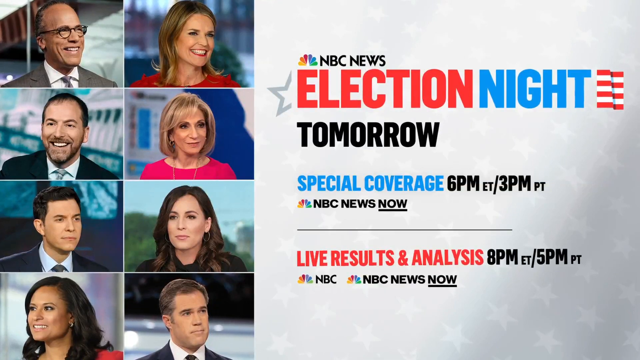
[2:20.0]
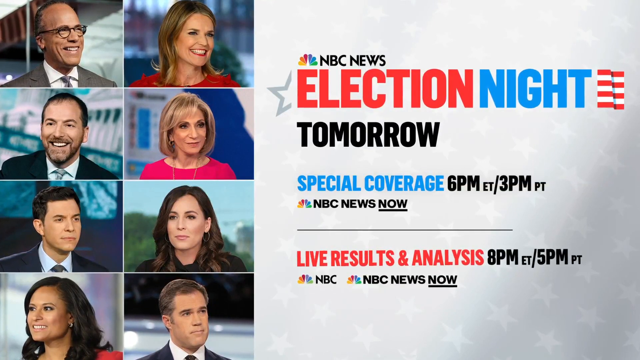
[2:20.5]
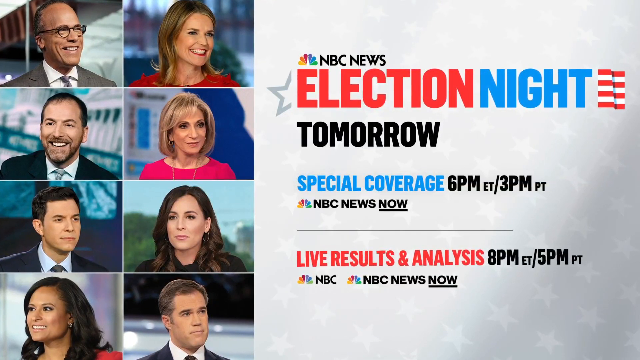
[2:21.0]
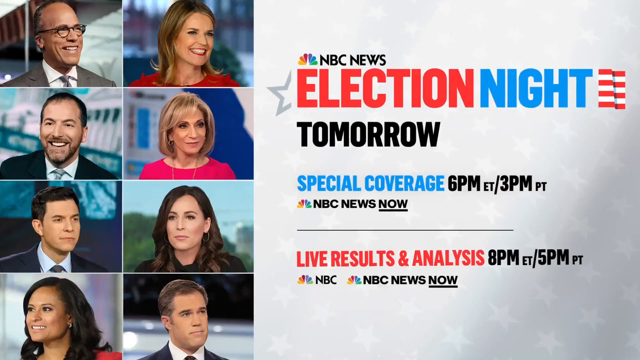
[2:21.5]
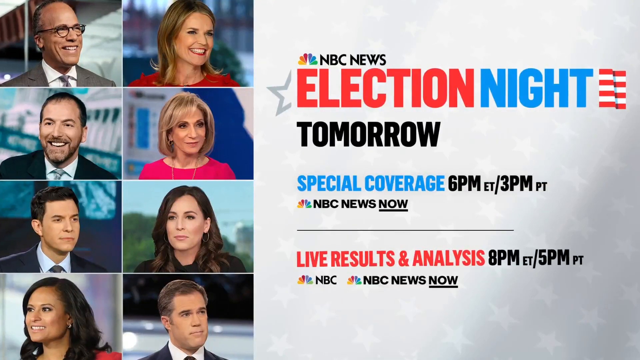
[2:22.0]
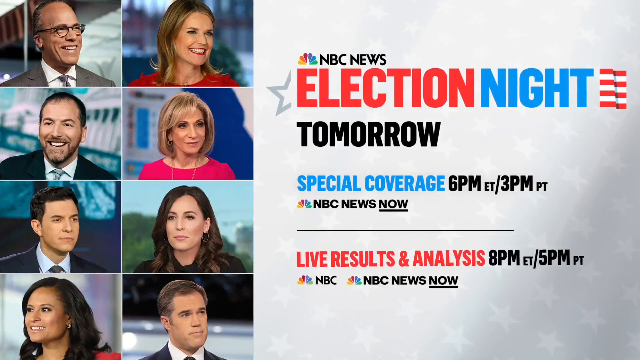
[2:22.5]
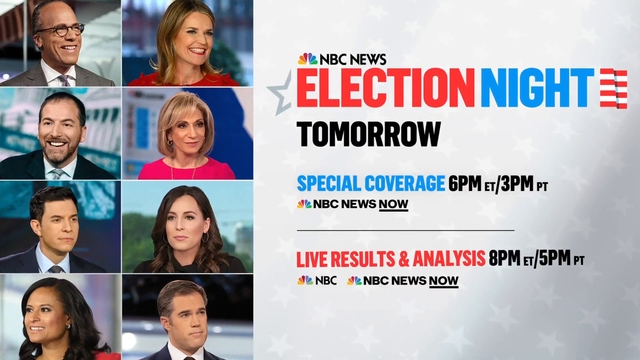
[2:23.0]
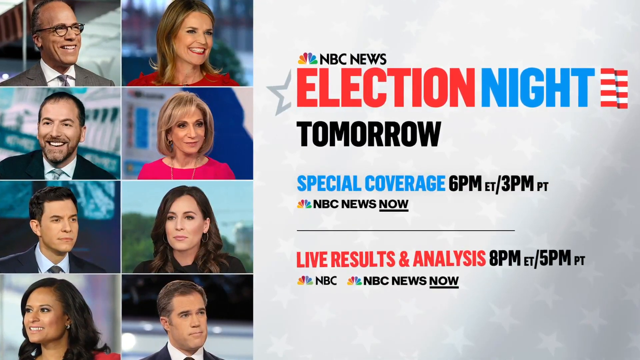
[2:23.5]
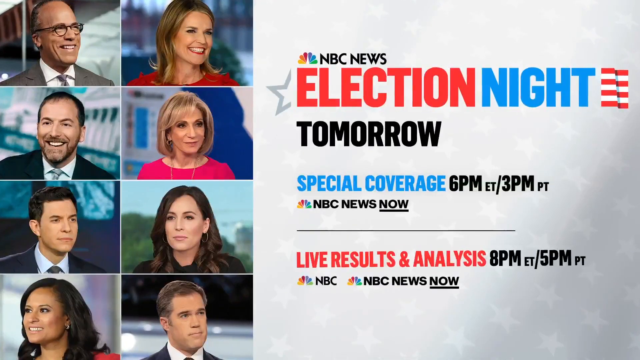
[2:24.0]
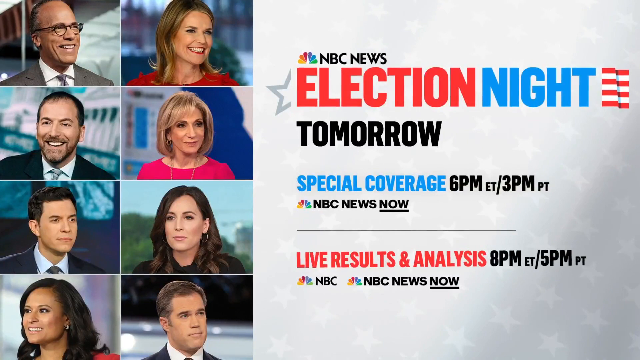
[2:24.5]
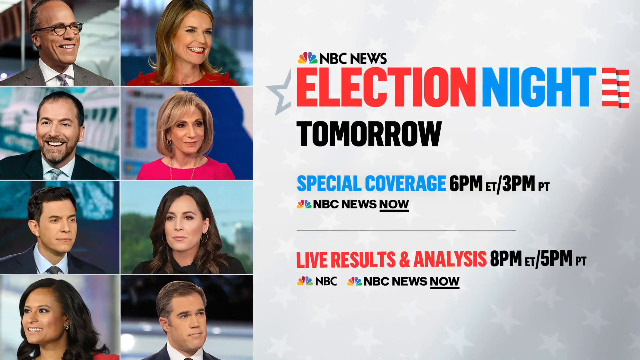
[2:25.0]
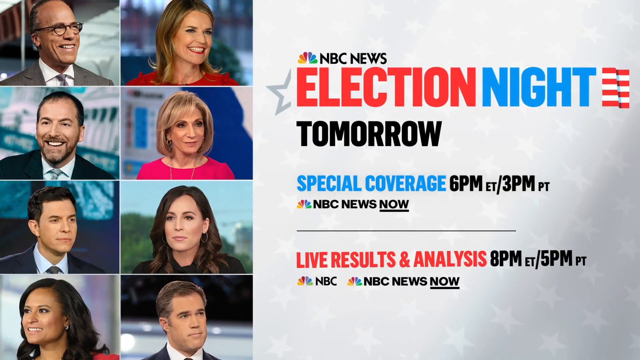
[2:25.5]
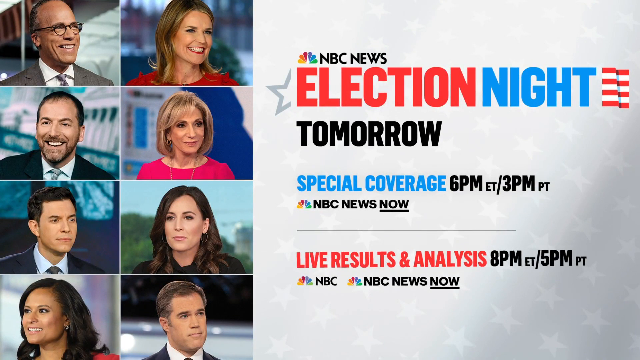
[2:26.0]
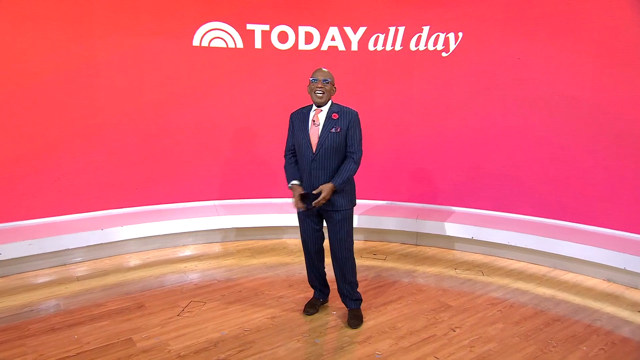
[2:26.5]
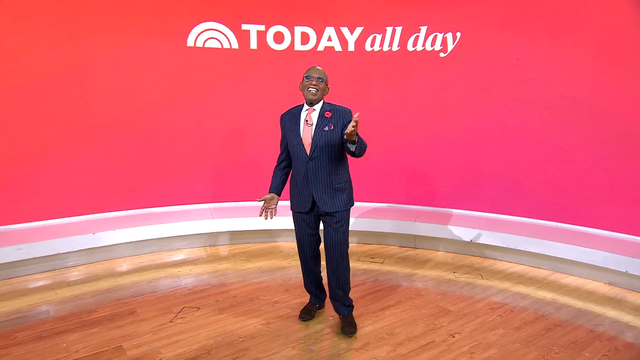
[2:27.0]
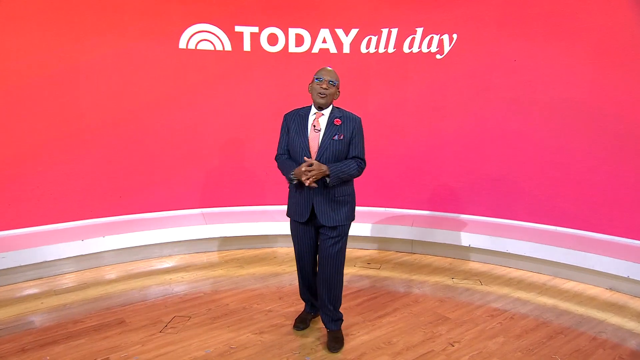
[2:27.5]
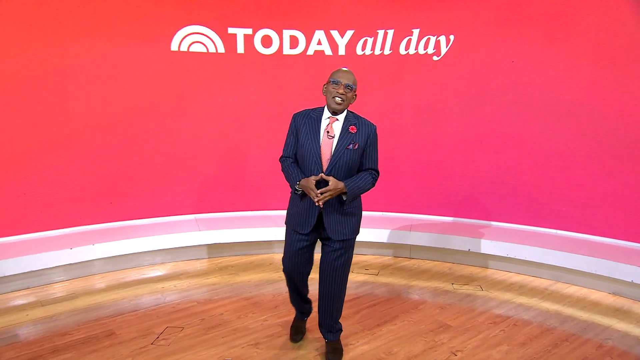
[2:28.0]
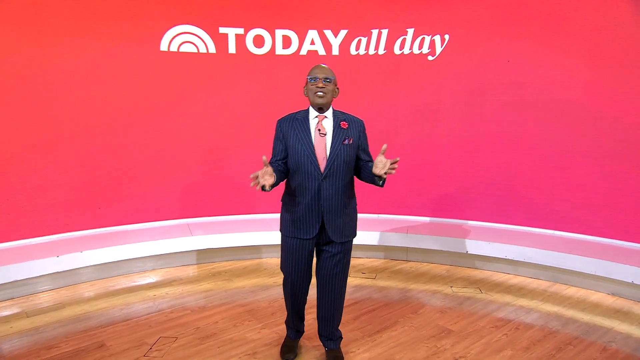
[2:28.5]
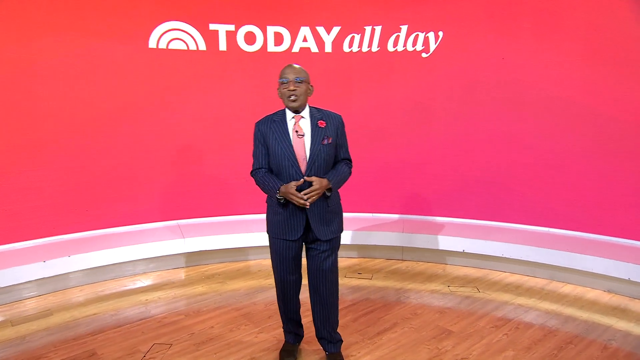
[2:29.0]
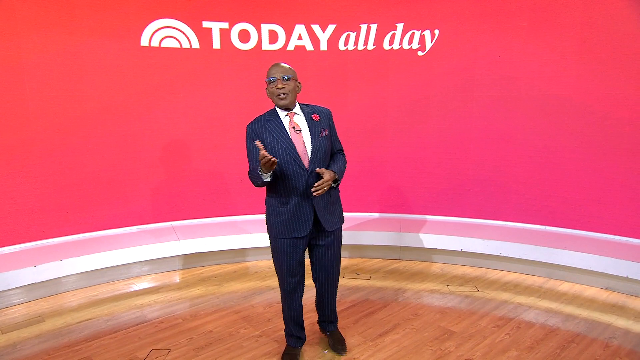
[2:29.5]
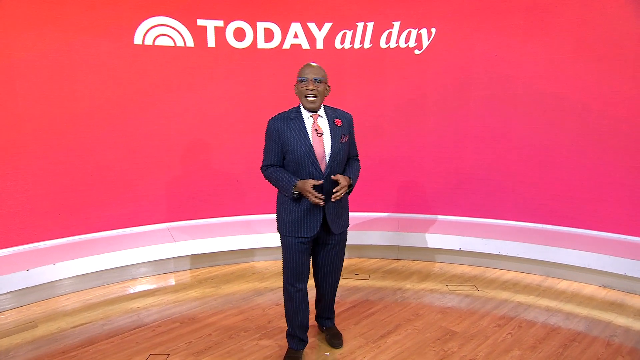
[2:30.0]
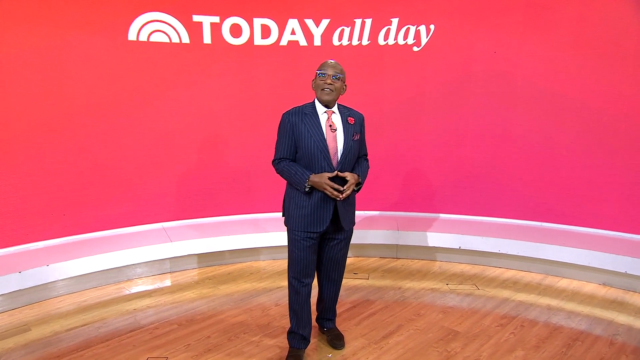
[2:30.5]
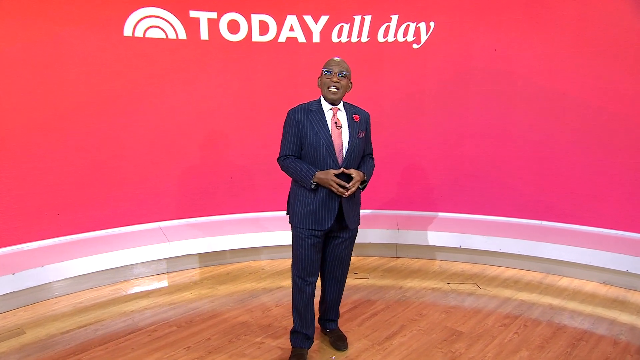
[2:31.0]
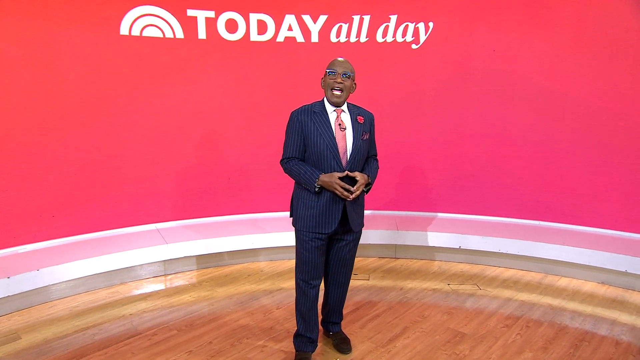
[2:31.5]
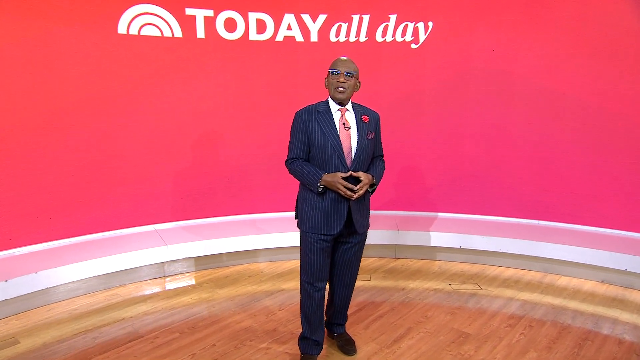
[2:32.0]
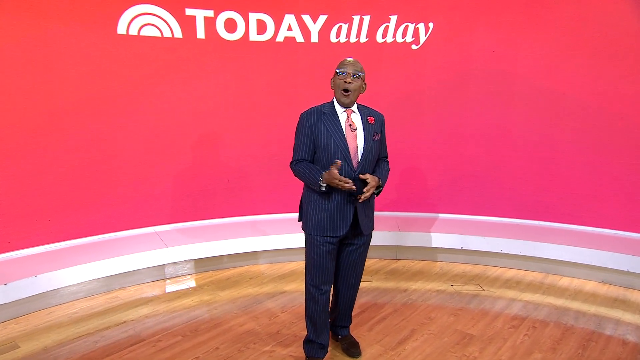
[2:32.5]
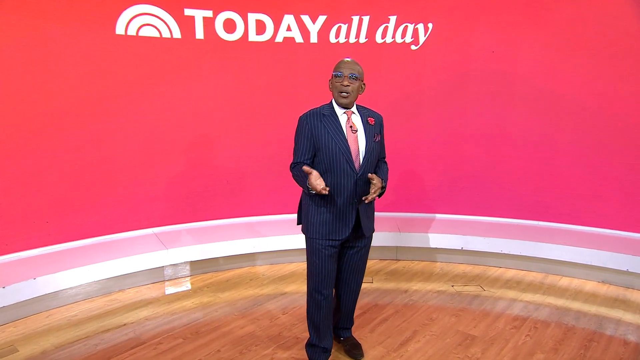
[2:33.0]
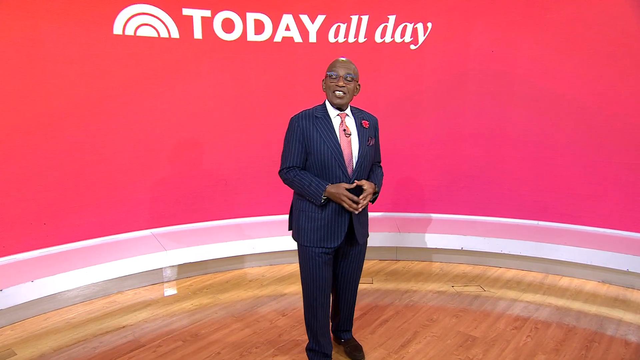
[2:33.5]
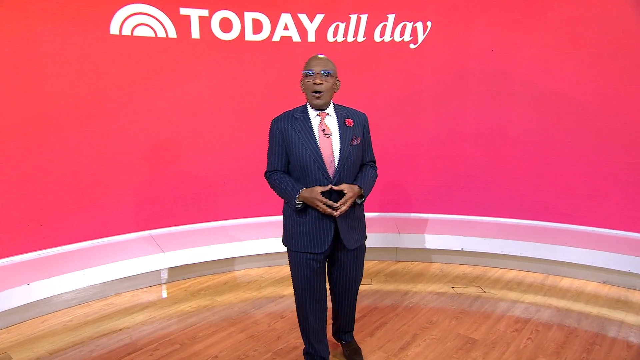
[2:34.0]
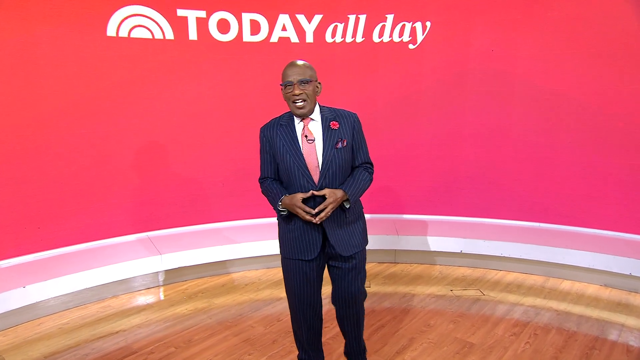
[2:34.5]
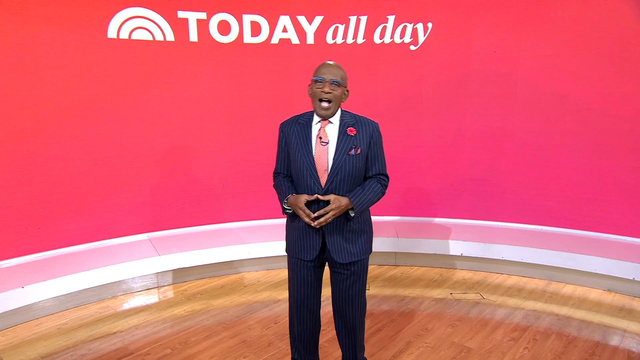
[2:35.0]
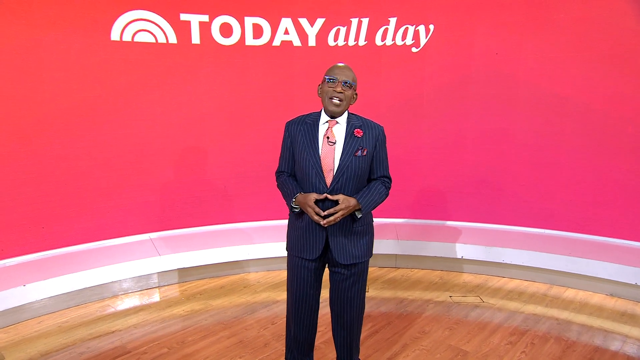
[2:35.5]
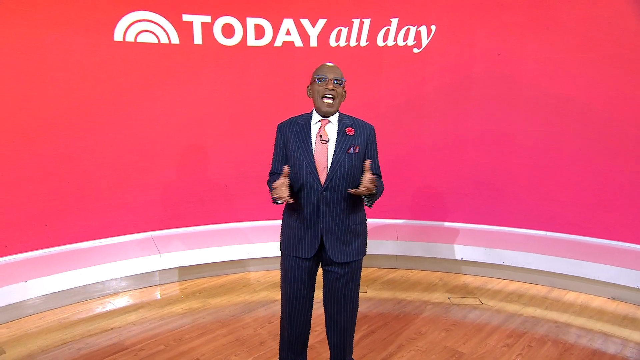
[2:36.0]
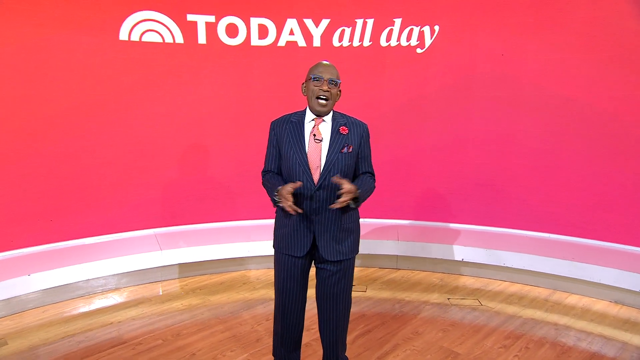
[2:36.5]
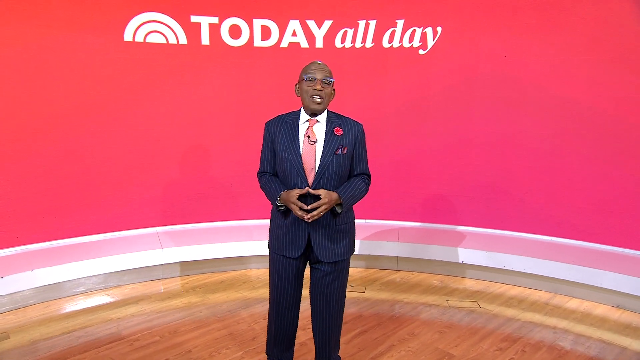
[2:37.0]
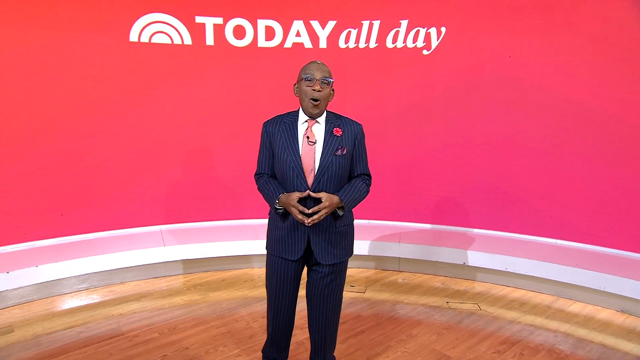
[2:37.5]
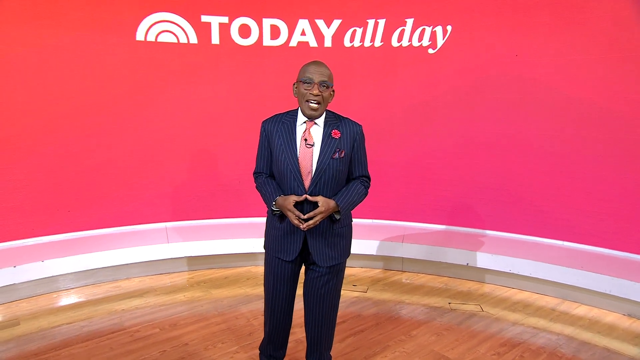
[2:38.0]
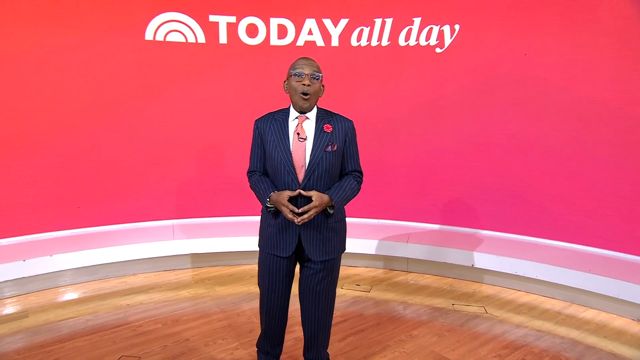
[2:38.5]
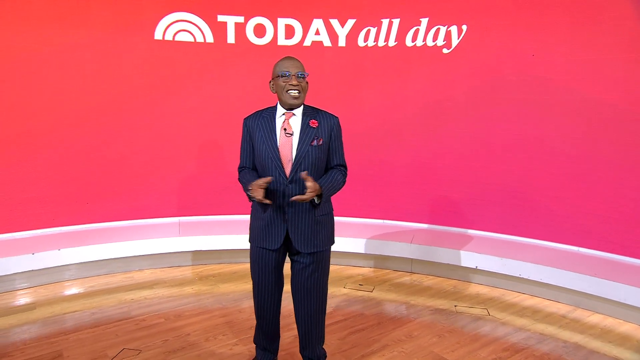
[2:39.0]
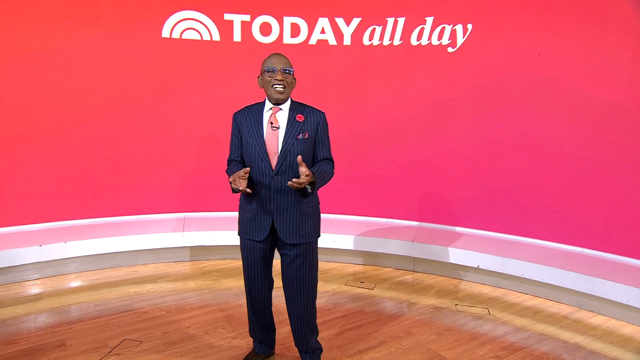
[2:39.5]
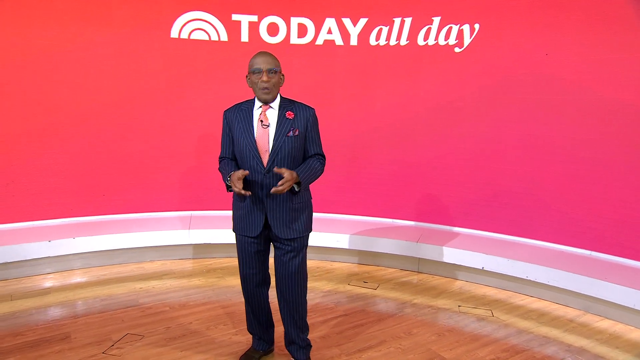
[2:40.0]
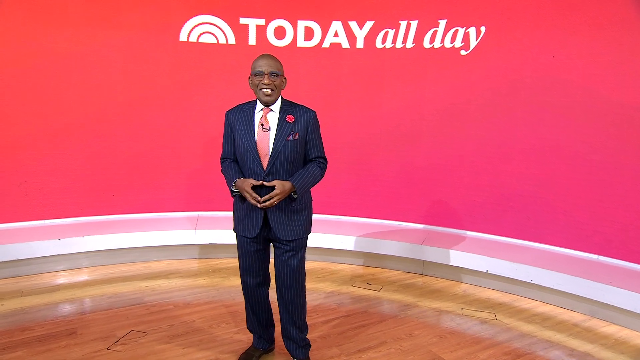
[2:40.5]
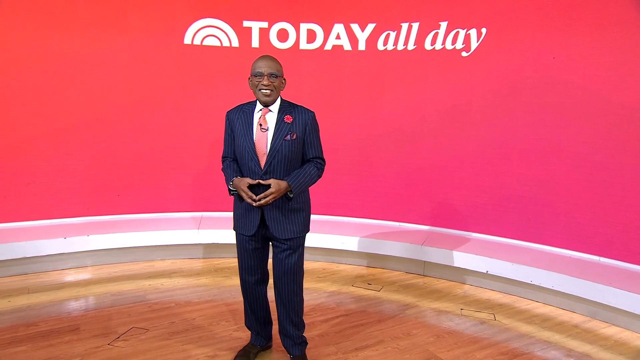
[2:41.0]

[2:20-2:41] The election night NBC News tomorrow screen remains, giving the special coverage times and results times, on NBC News and NBC News Now. Next comes "Today all day": a Black man in a dark blue suit with a pink tie, wearing glasses and with a bald head, stands behind a pink screen that reads "today all day." The floor is wooden and the lighting is very bright. He speaks to the camera and points toward it, seeming very excited. There are no captions on screen.